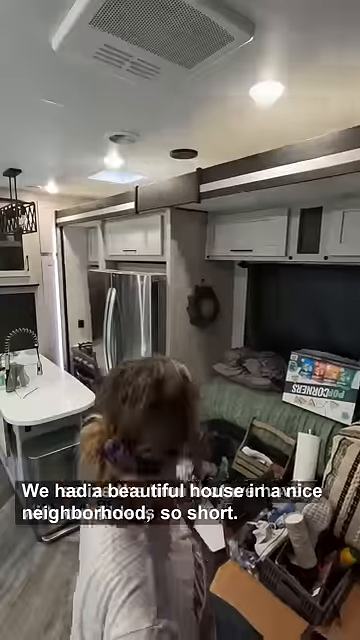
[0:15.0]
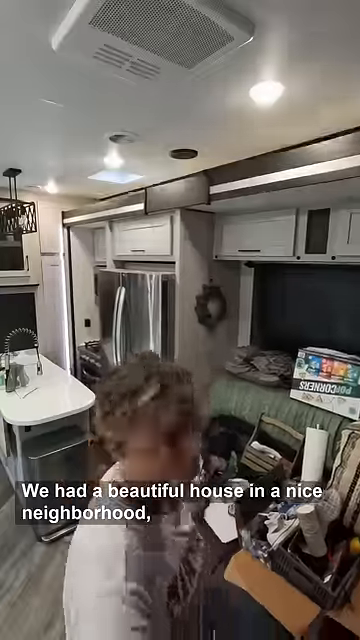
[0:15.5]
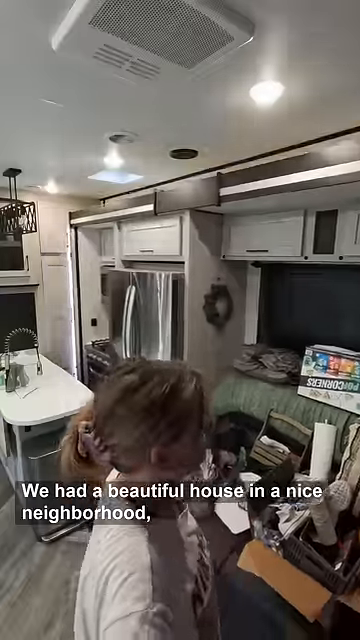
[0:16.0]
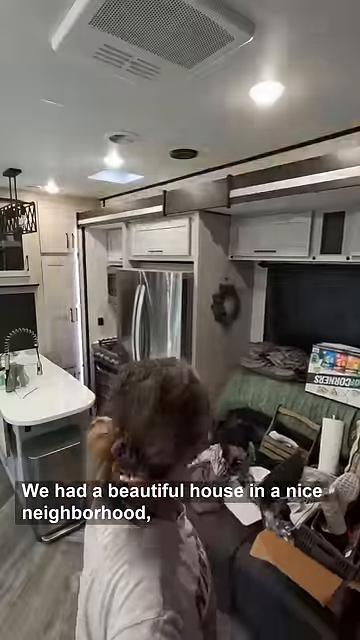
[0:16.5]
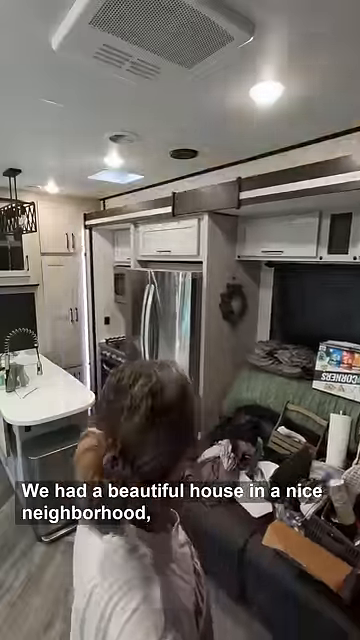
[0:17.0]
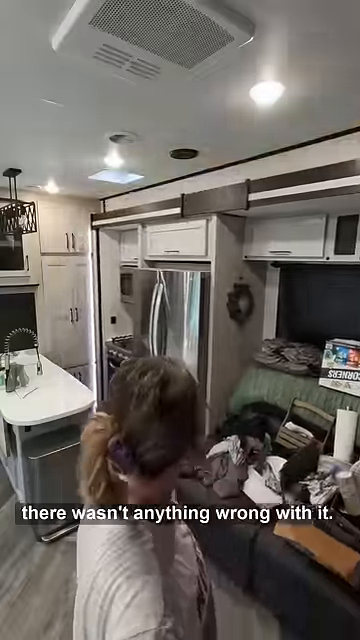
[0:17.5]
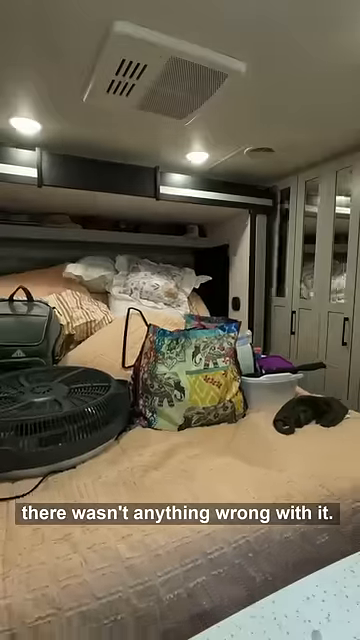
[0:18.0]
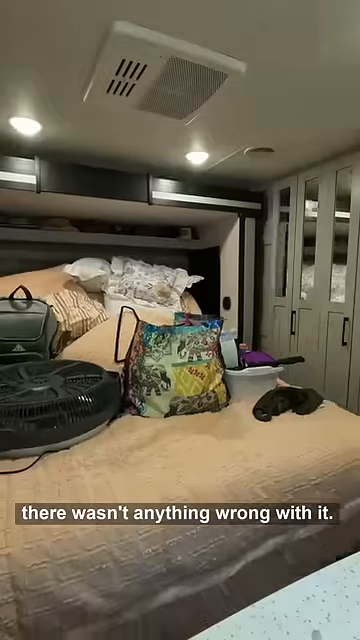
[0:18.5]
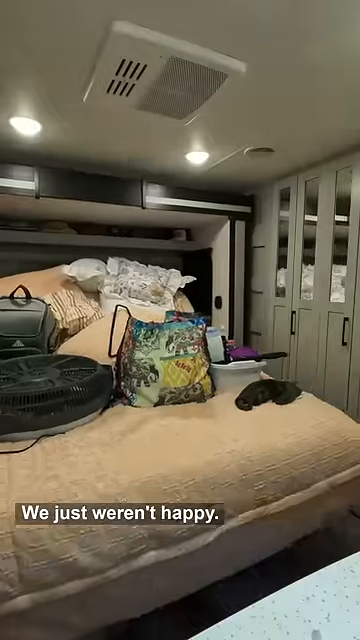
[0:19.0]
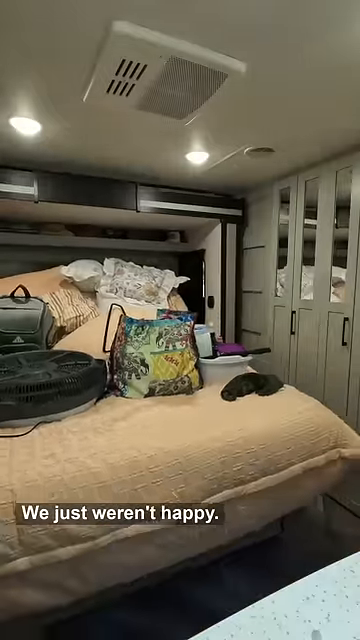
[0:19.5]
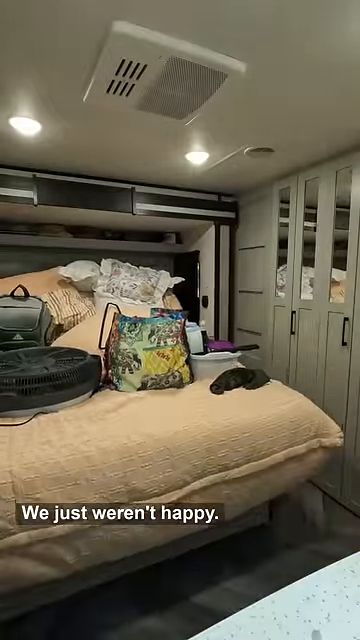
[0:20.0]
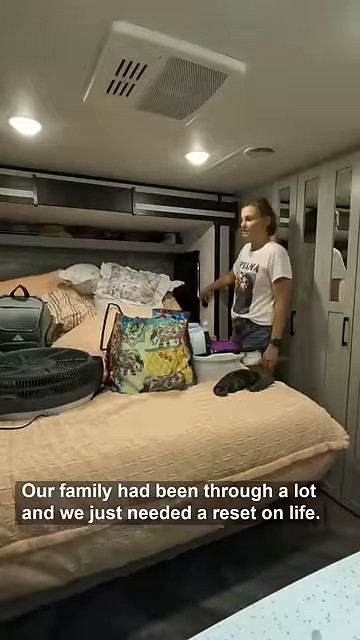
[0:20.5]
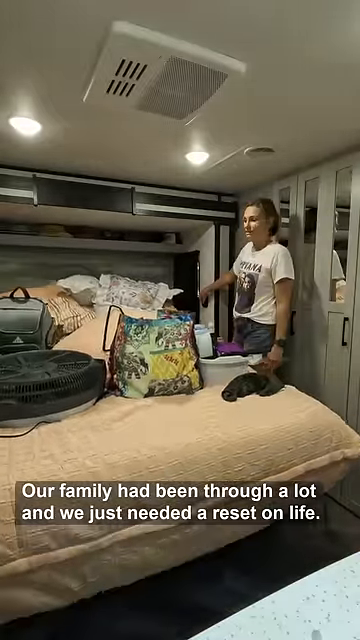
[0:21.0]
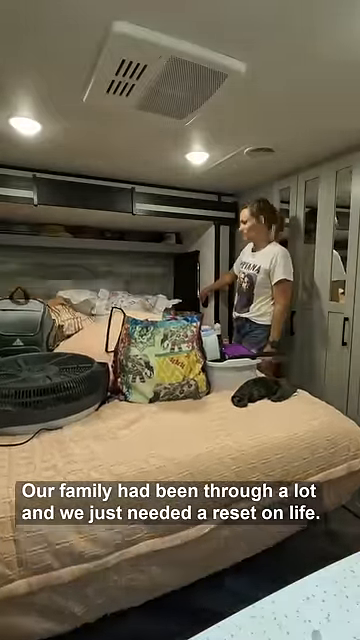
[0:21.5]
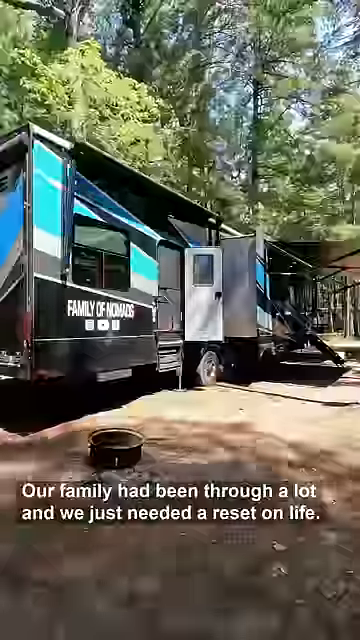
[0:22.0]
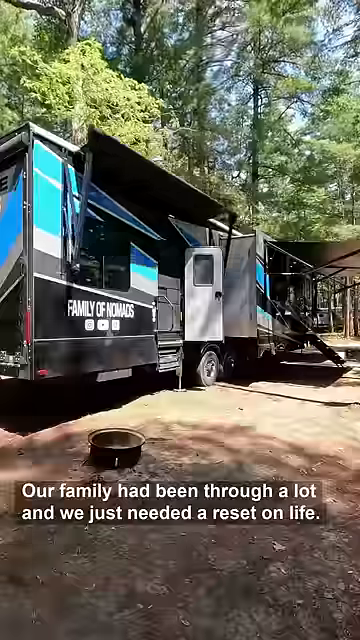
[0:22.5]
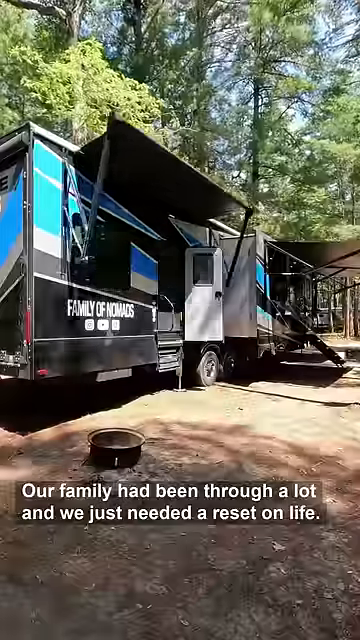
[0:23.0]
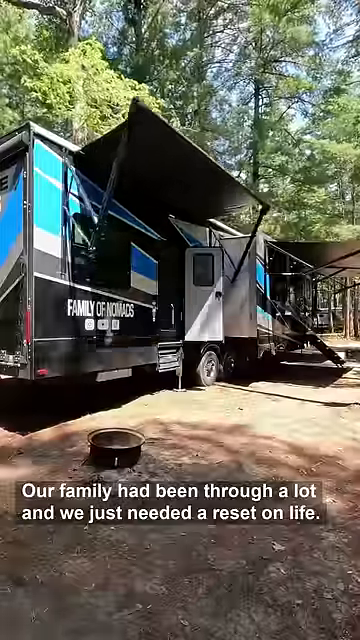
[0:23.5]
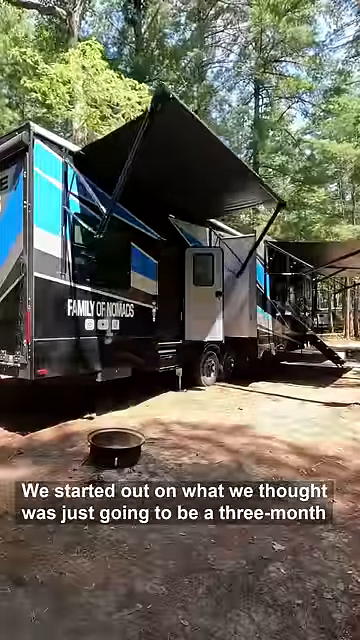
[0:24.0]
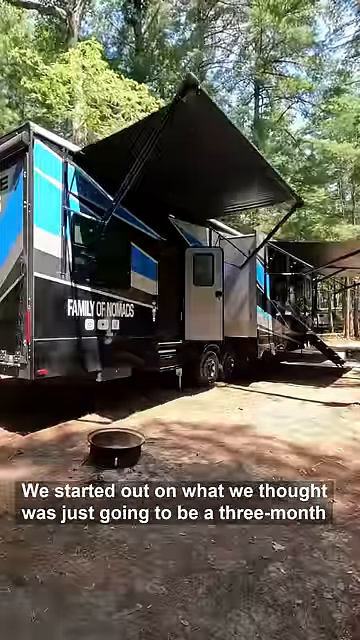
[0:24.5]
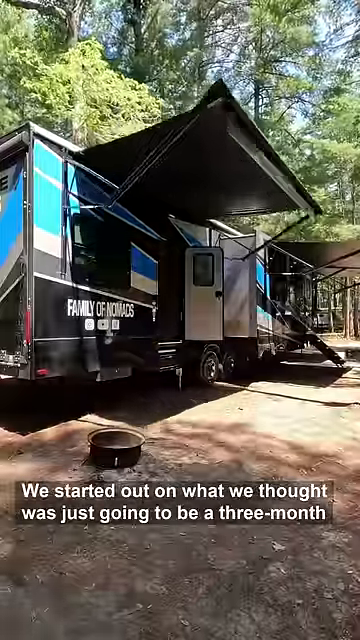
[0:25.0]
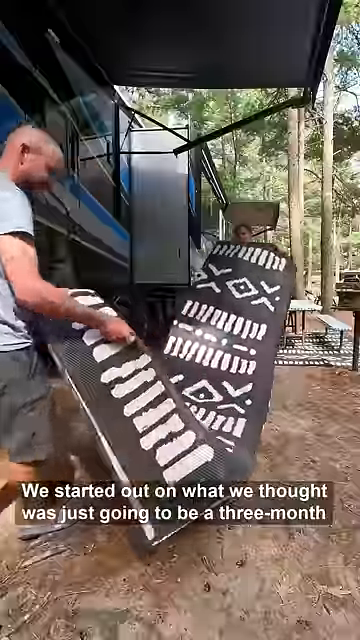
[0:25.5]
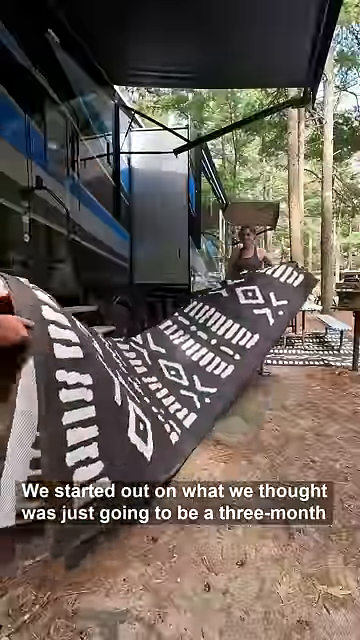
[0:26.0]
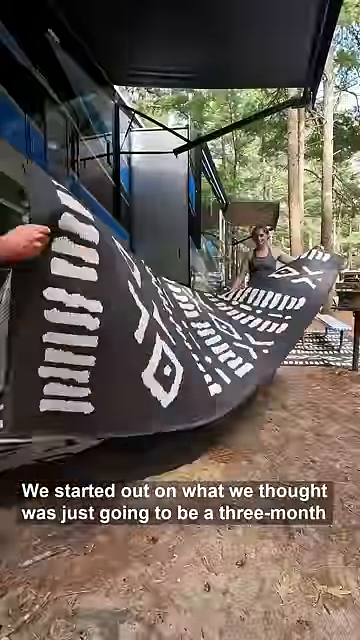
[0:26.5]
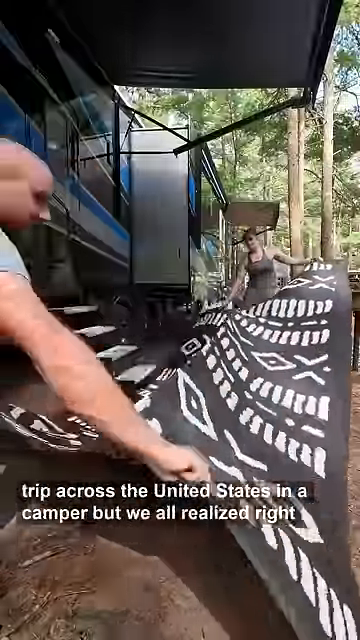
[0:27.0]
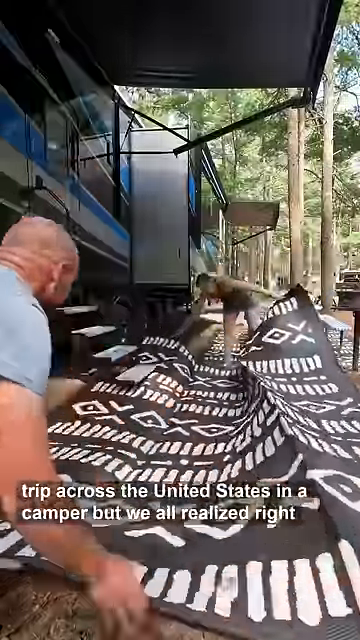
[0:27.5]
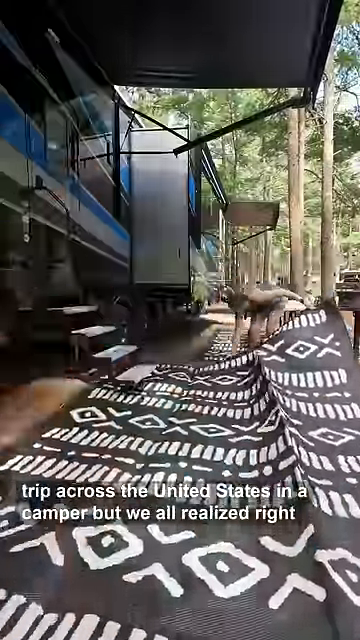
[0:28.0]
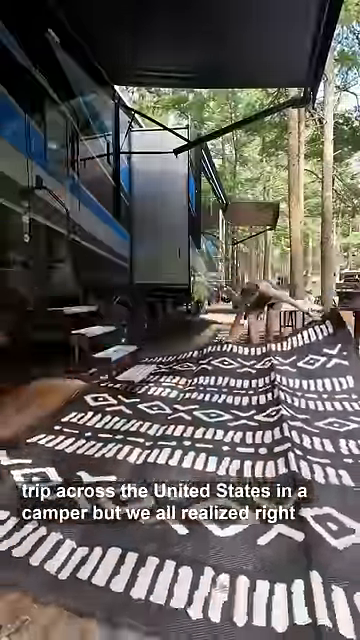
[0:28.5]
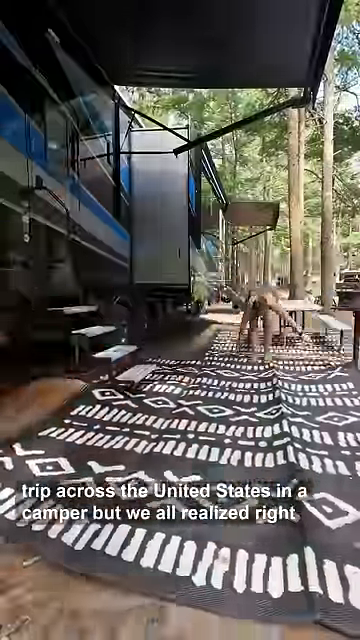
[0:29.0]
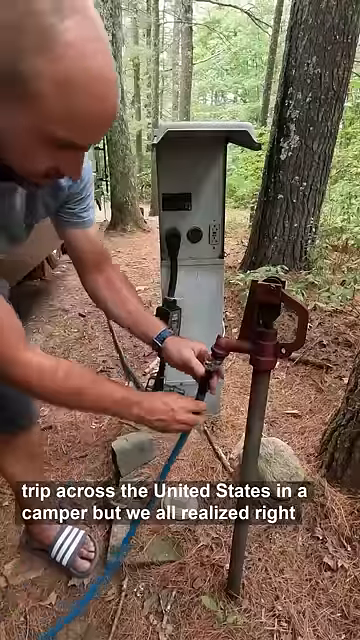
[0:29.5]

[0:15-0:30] Inside the RV, all the accommodations are present. There is a large bed, either a queen or a king, and everything appears to be powered by hydraulics. Outside, a woman helps the man finish setting up the RV at the spot, letting down the awning, laying out what seems to be a rug underneath the steps, and hooking up the water. Back inside, the bed apparently comes out by way of hydraulics, and one section appears to have a full bath or closets; the woman demonstrates how the hydraulic parts move back out. Also inside is what looks like the kitchen area, with a basin and a faucet, apparently a tiny island, a stove, a refrigerator and overhead lighting.